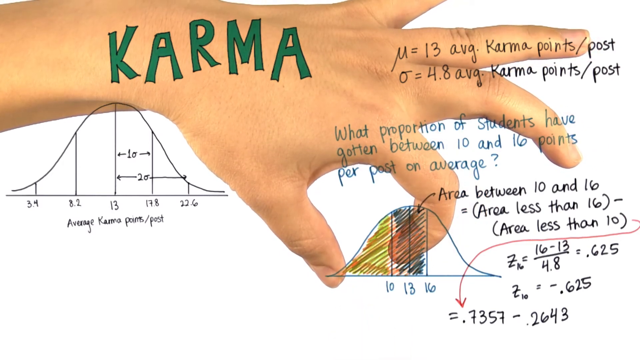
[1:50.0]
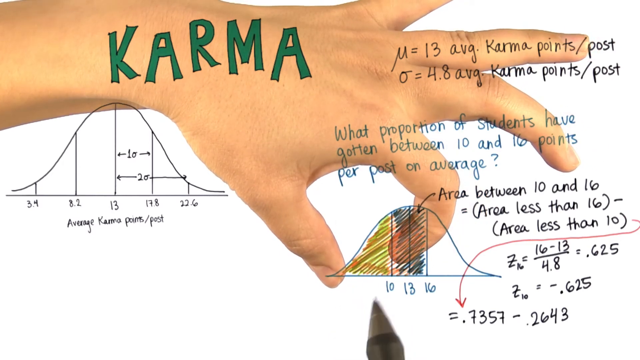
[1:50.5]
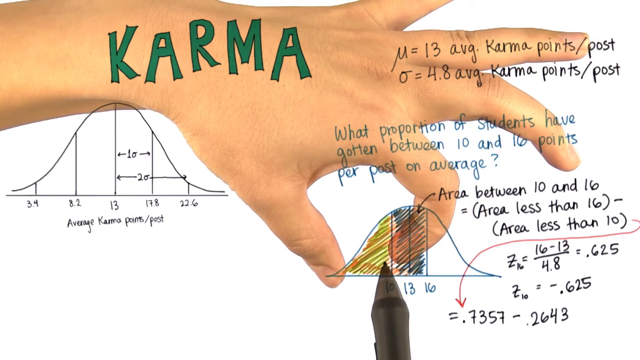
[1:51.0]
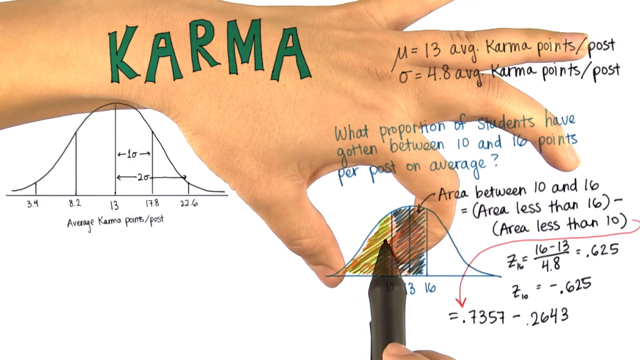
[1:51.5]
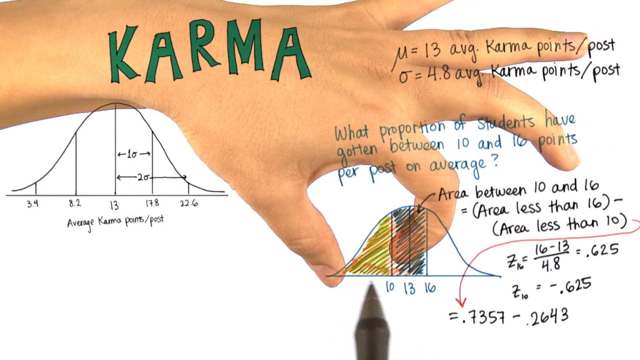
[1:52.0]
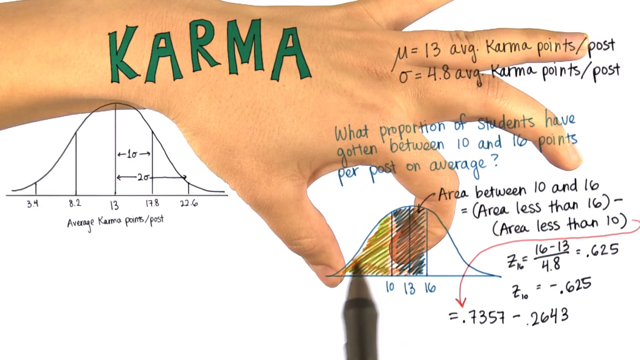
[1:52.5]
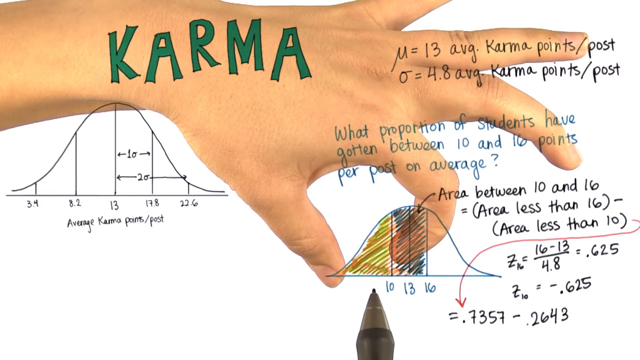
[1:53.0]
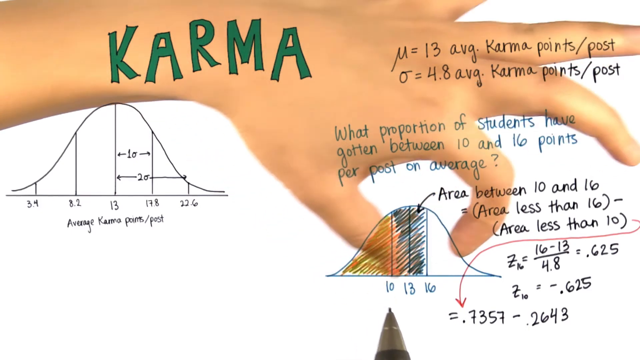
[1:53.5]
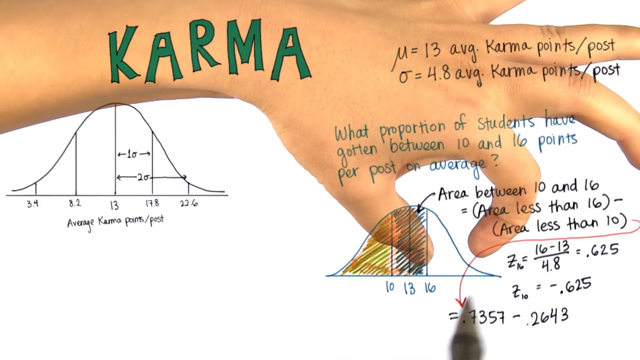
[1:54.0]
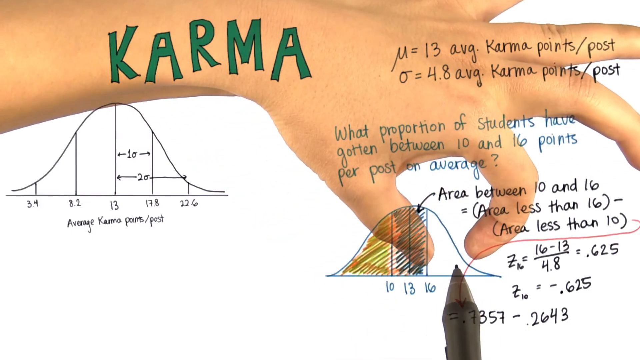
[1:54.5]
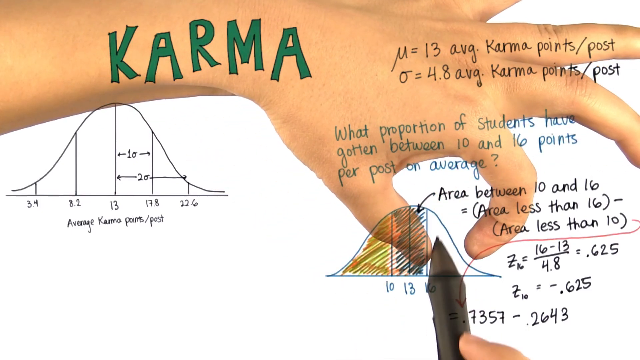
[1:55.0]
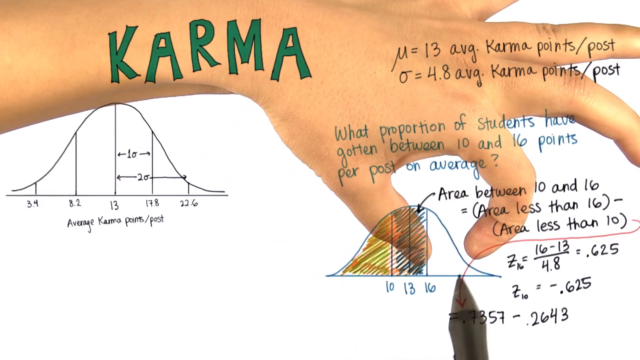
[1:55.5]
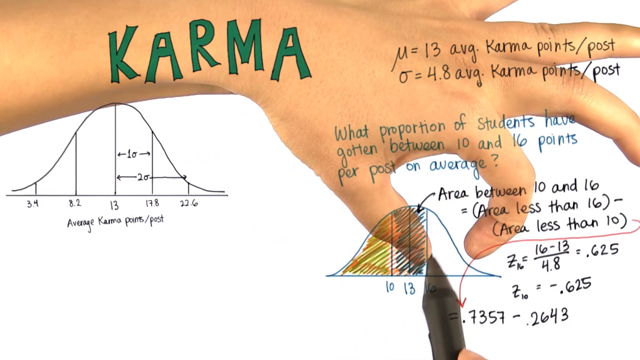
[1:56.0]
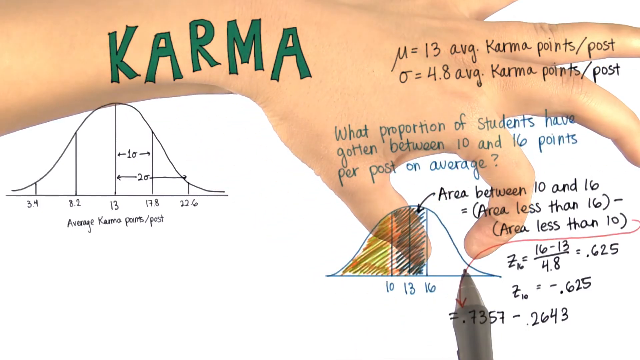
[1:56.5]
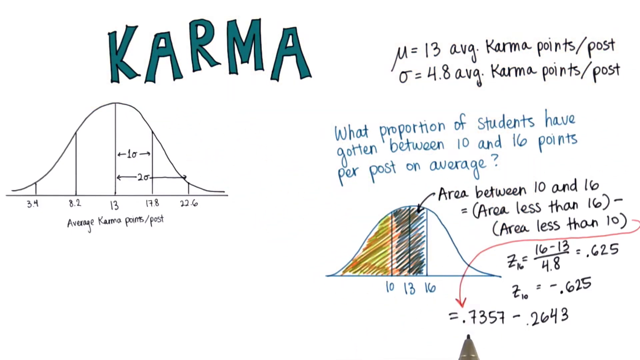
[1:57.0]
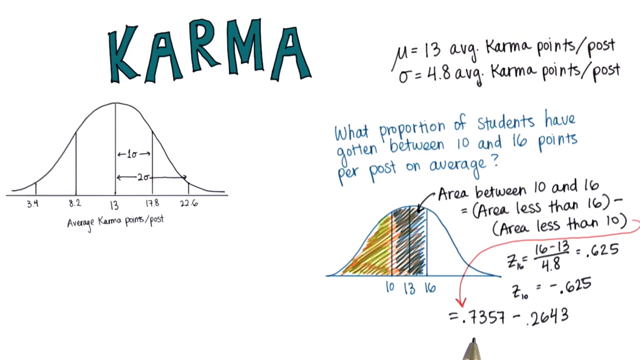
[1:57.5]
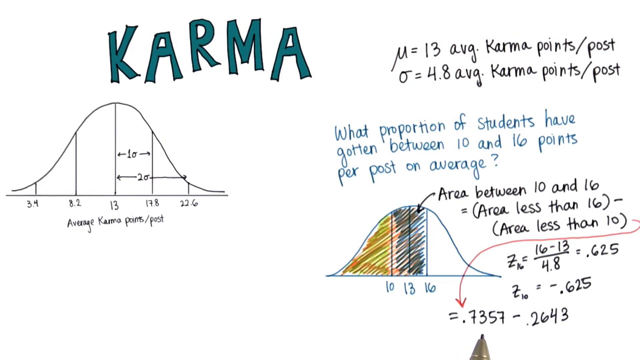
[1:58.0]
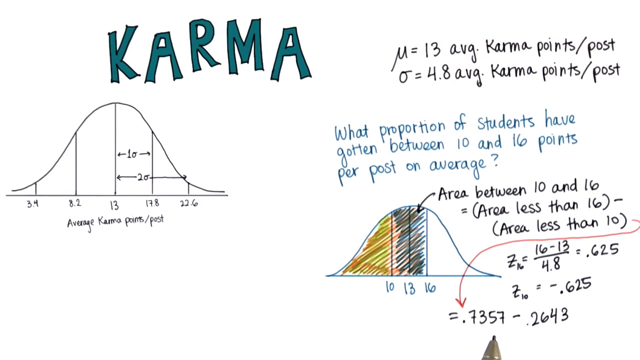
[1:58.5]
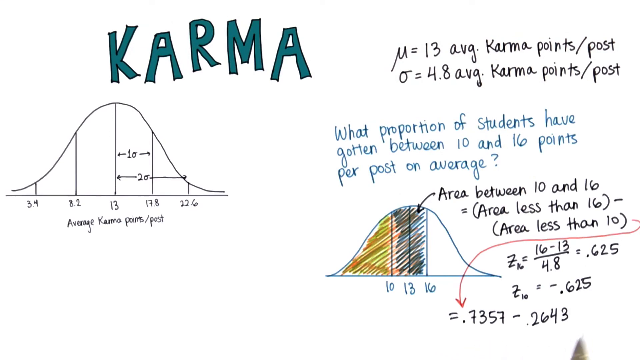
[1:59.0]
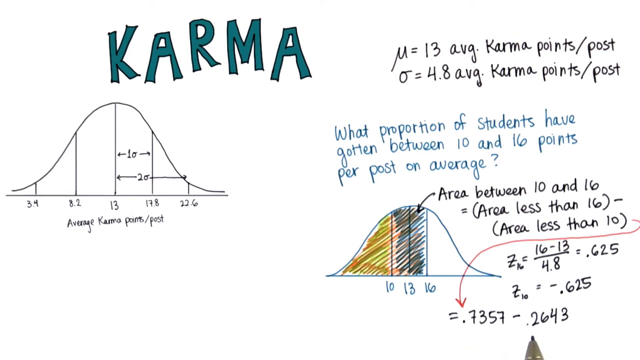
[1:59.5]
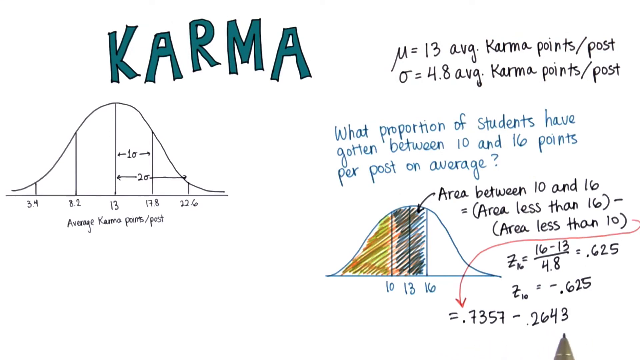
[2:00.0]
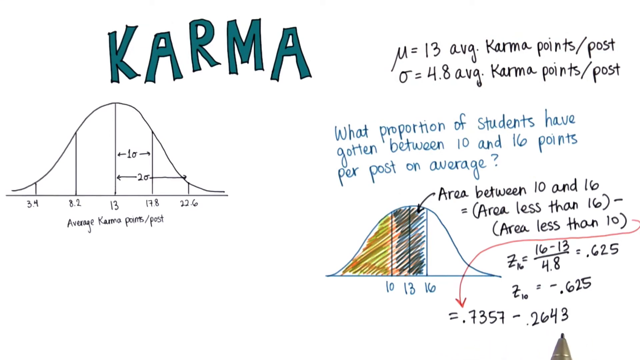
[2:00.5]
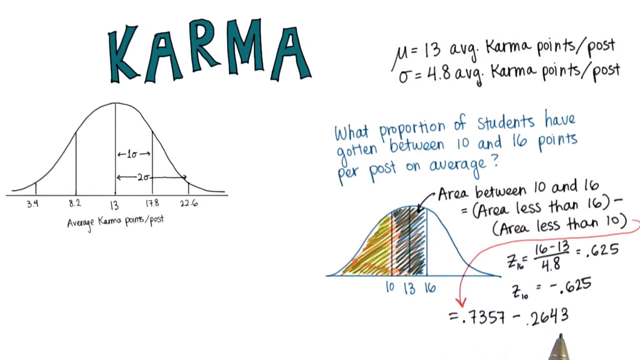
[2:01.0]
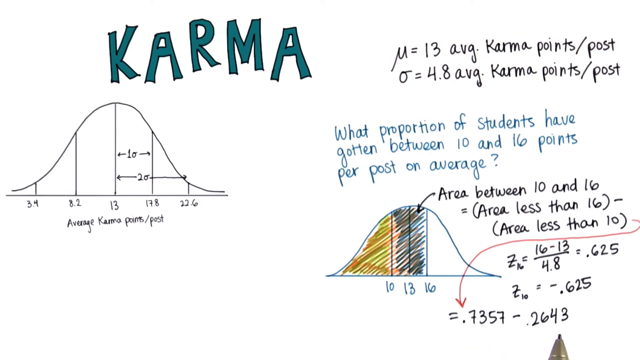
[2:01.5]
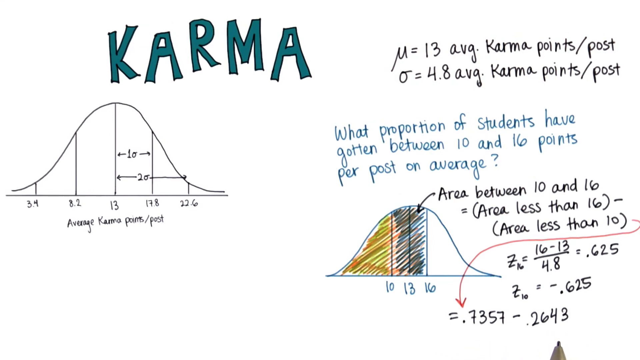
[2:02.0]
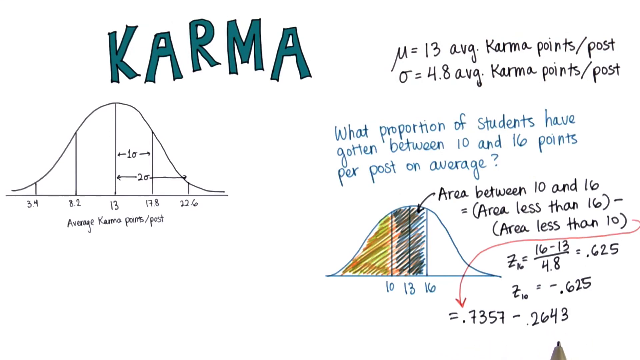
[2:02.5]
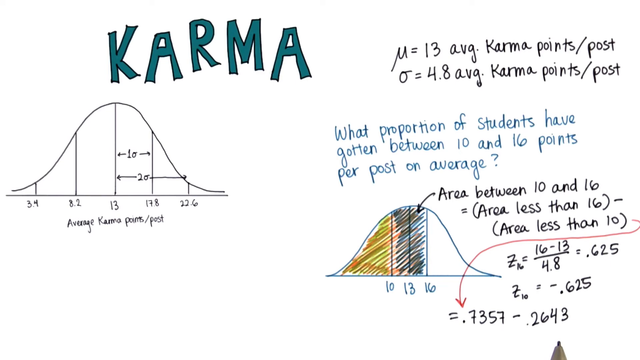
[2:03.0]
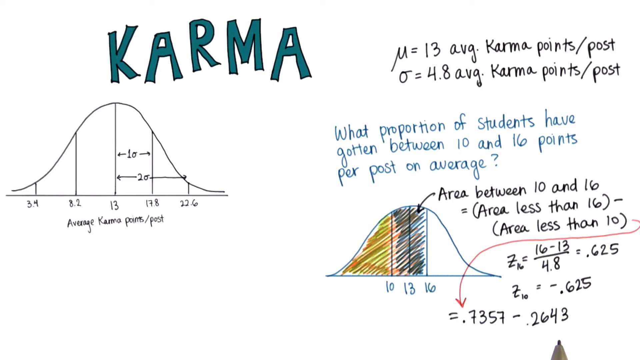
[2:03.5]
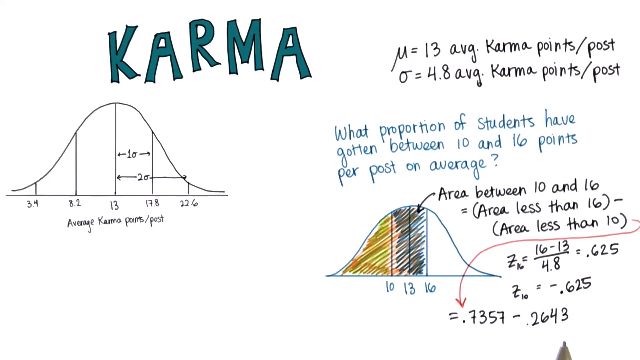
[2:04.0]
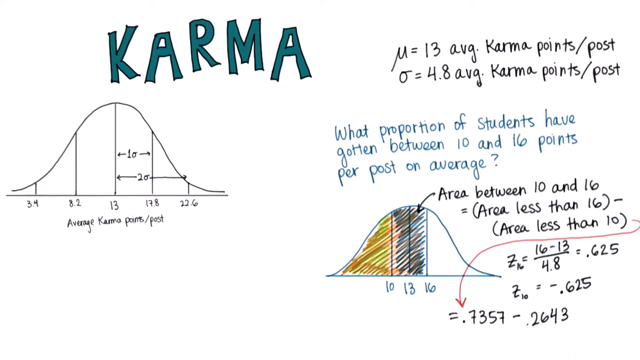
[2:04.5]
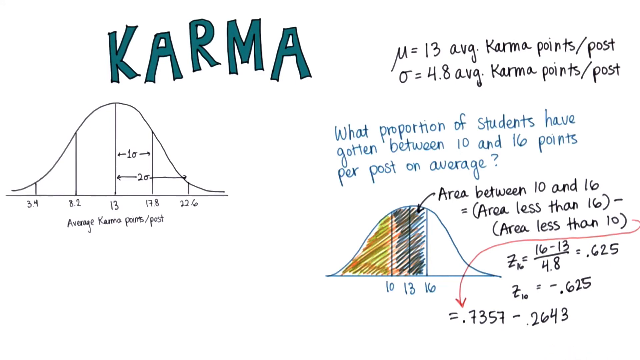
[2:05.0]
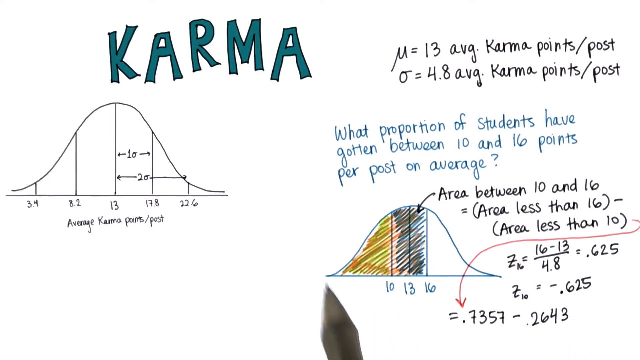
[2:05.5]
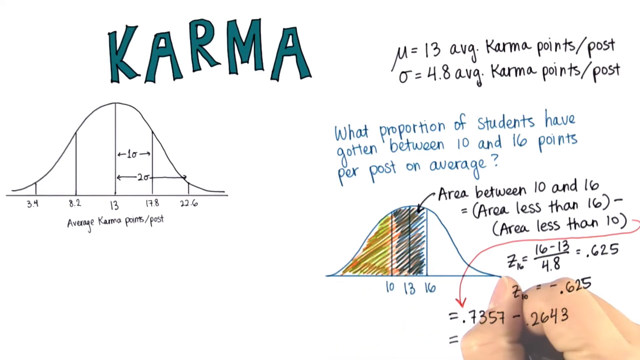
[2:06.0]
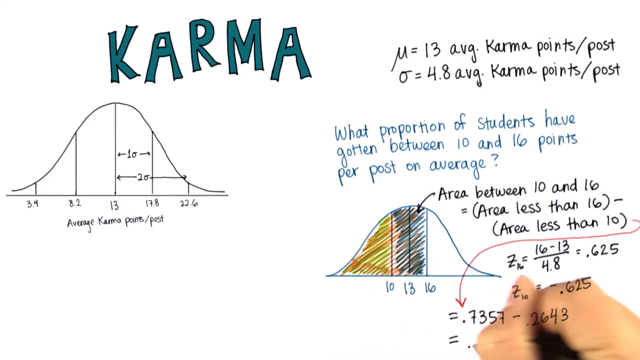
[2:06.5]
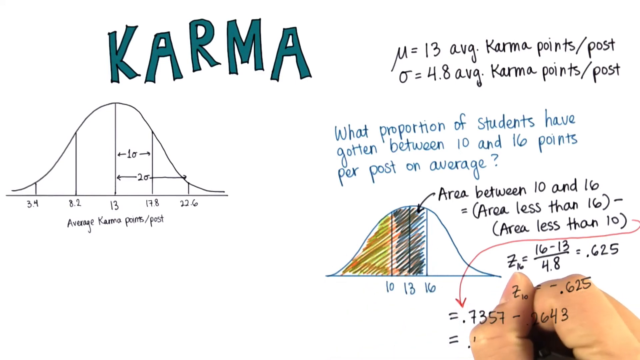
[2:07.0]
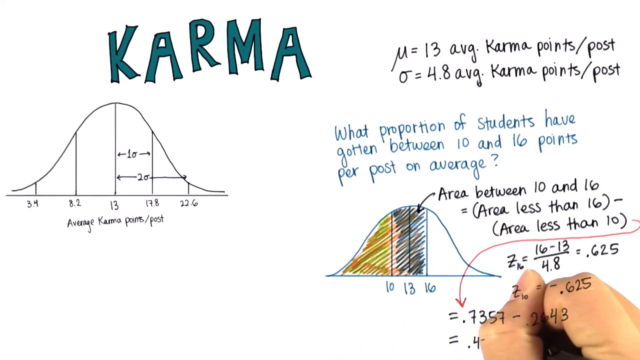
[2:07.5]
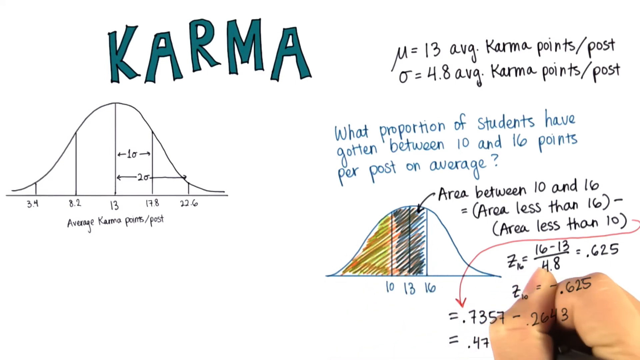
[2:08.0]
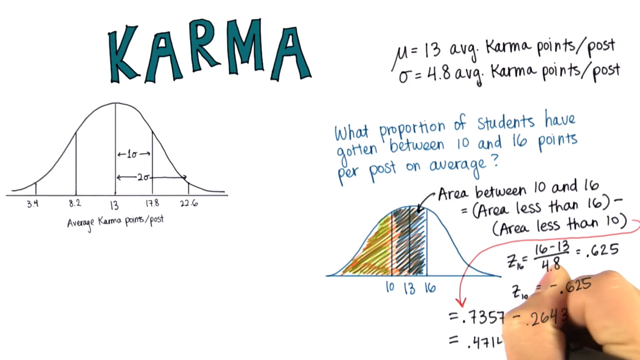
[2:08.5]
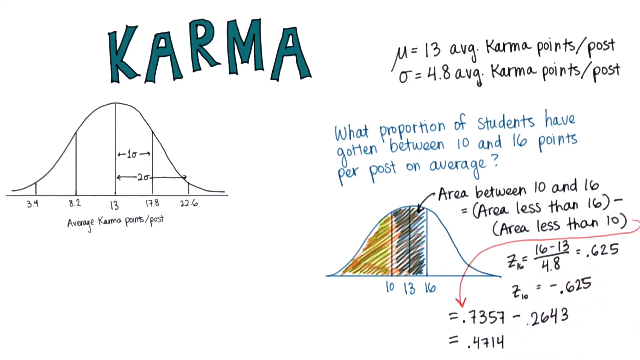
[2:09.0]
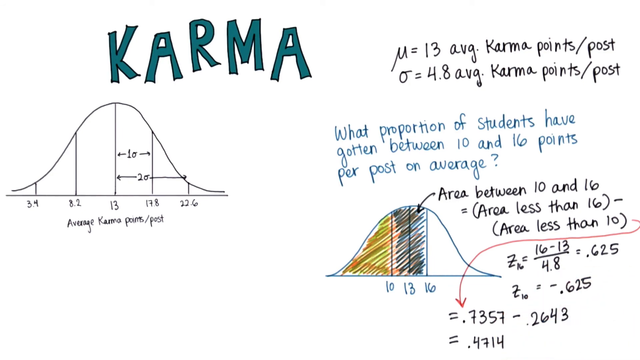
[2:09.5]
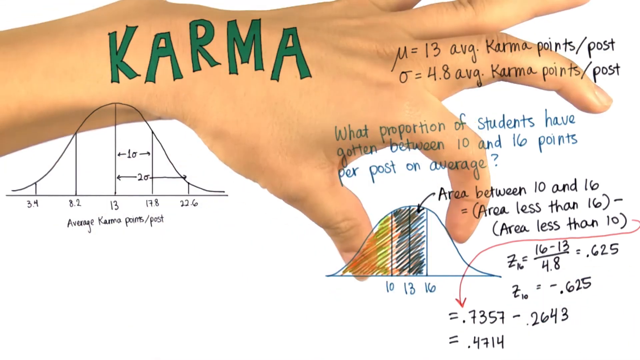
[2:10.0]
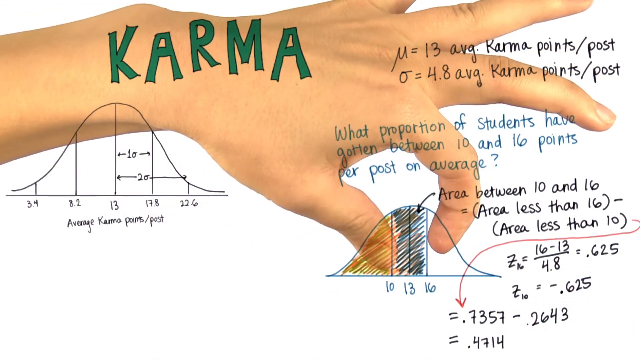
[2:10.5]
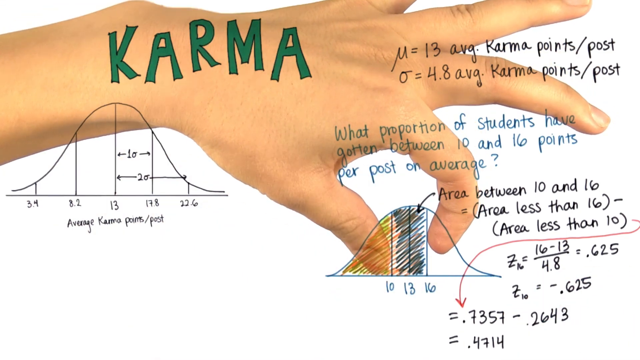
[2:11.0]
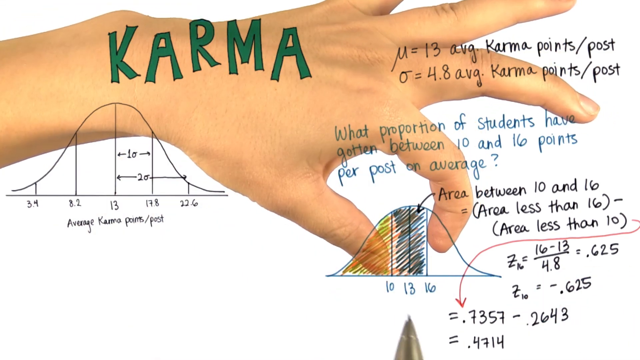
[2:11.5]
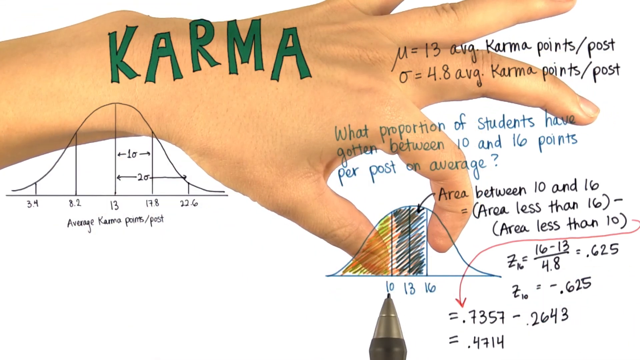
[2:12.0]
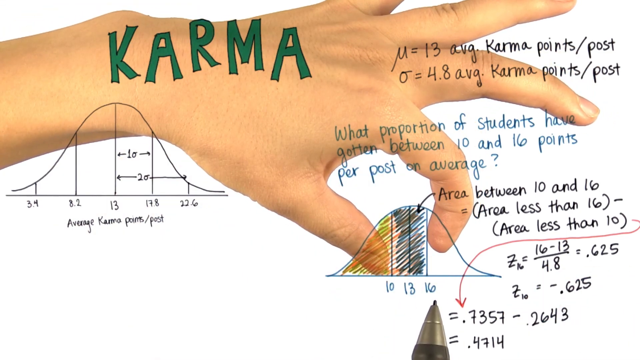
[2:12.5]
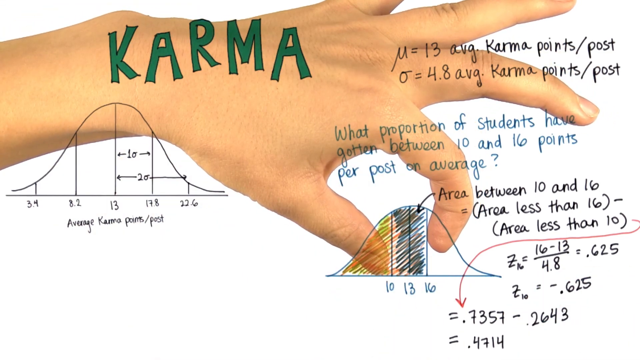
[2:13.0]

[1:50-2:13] A projection fills most of the view, with a little white background visible, and an arm extends across the majority of the screen from the top left corner. The narrator makes a pinching shape with the thumb and index finger to show distance on the projection, with the other three fingers spread out. The projection reads "karma" across the top in large green square blocky letters; underneath is a small graph reading "average karma points" with numbers going from 3.4 to 22.6. On the right, writing reads "13 average karma points per post" and "4.8", and a question reads "what portion of students have gotten between 10 and 16 points per post on average". On the graph underneath, the narrator uses his fingers to measure distance, measuring from 10 and then the same distance above 16, showing equal spacing above and below on the graph. He then fills in the number 0.4714.